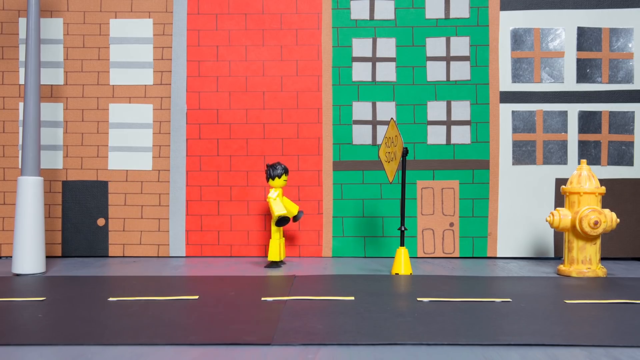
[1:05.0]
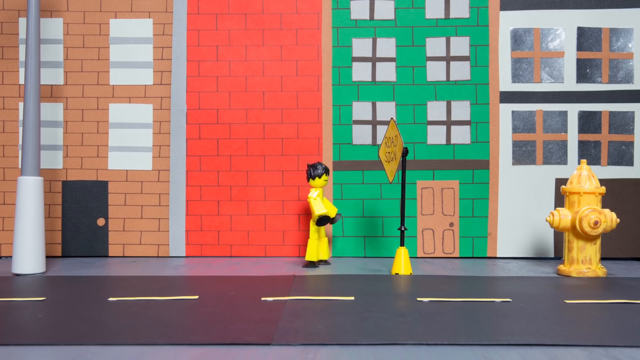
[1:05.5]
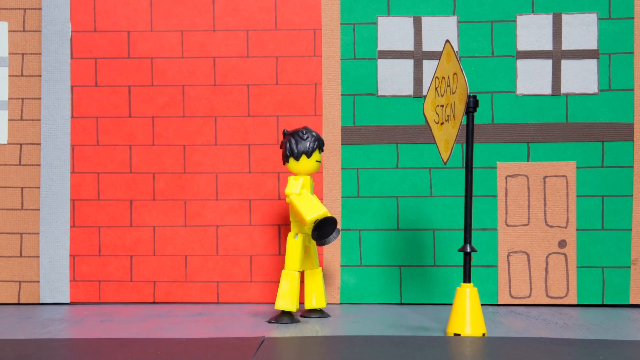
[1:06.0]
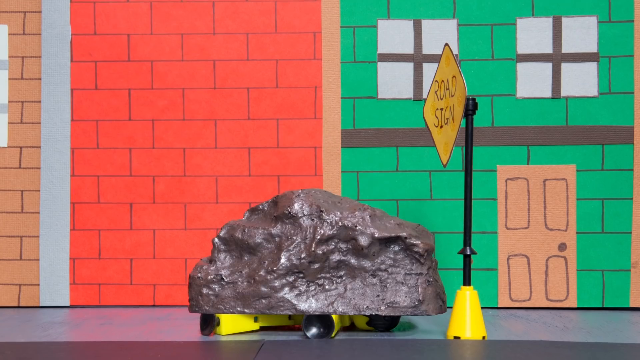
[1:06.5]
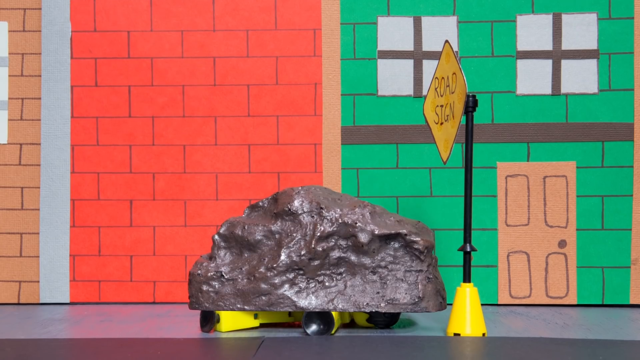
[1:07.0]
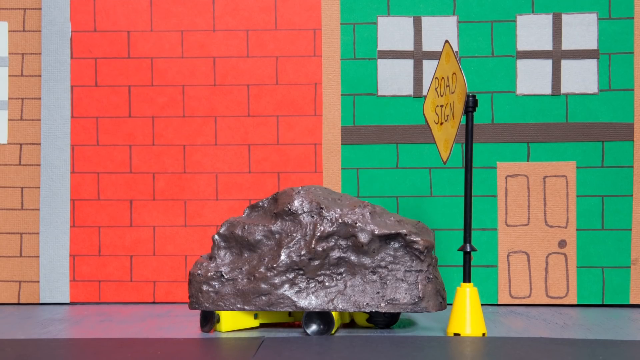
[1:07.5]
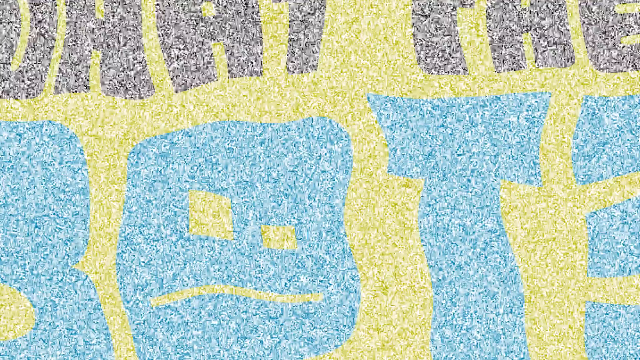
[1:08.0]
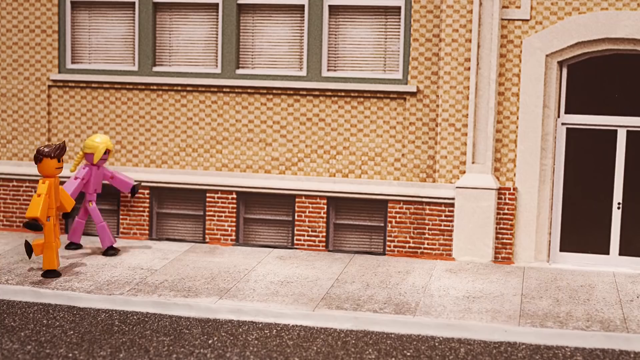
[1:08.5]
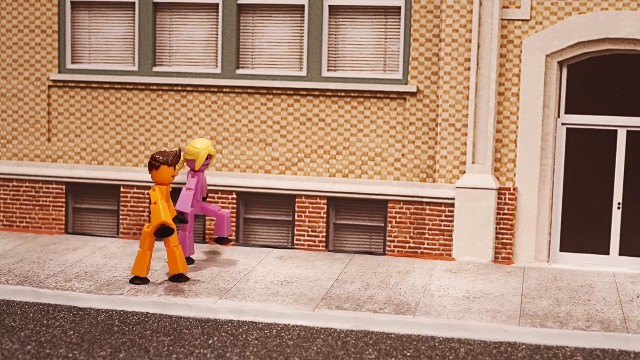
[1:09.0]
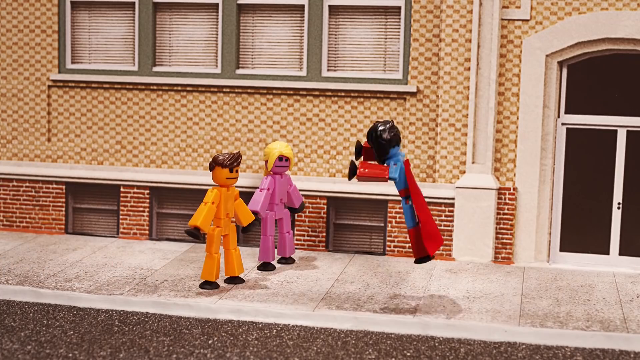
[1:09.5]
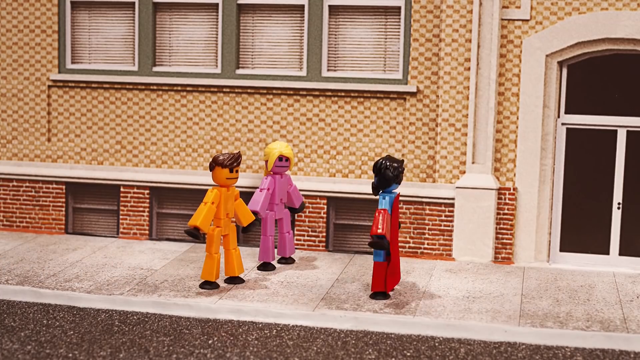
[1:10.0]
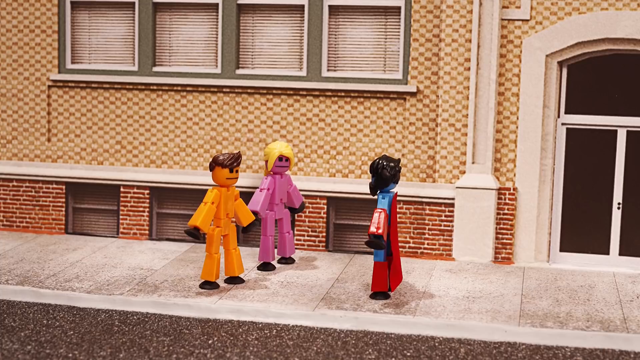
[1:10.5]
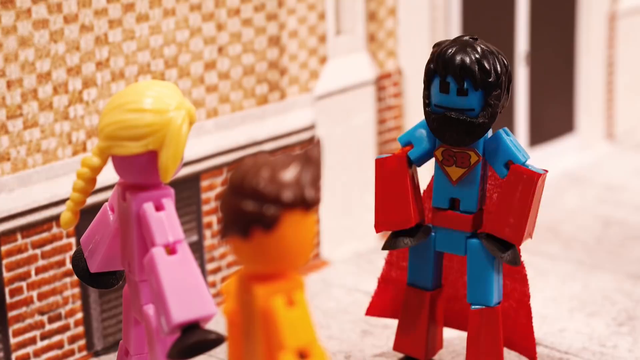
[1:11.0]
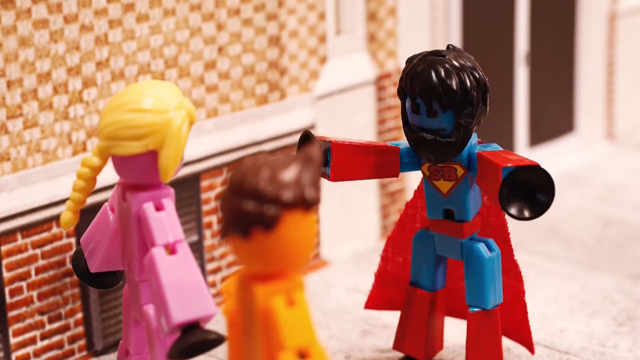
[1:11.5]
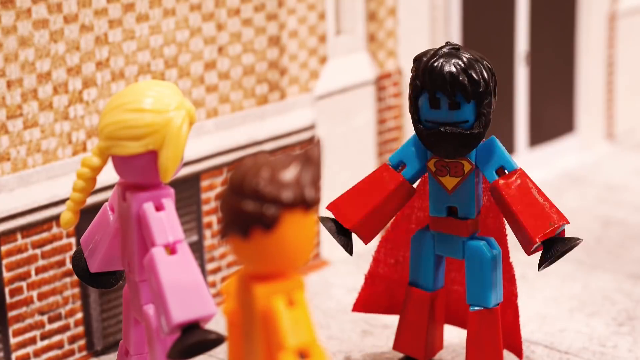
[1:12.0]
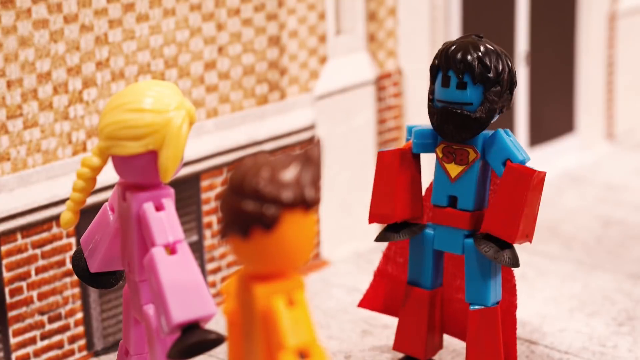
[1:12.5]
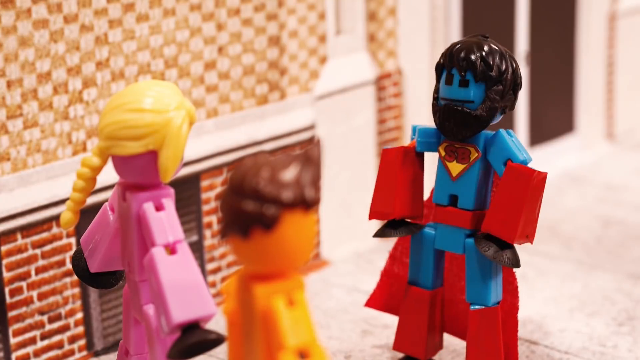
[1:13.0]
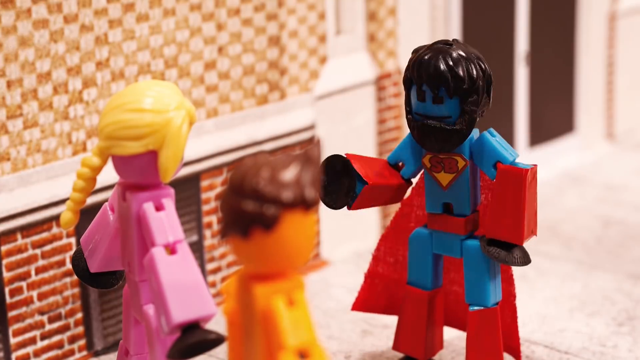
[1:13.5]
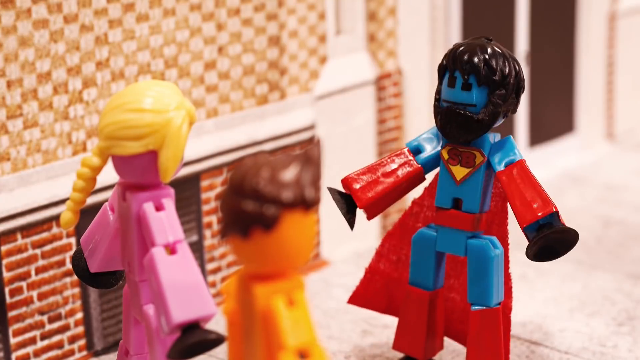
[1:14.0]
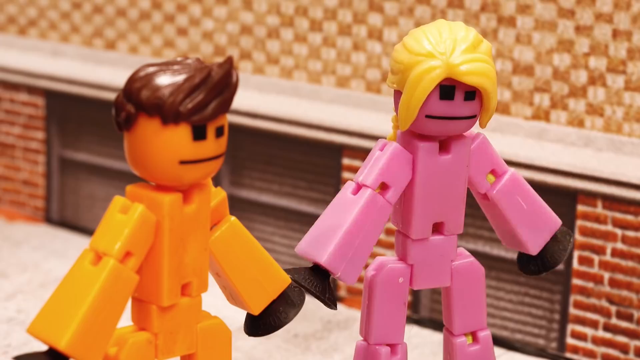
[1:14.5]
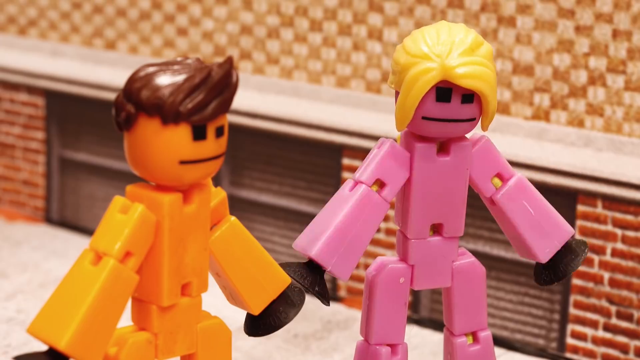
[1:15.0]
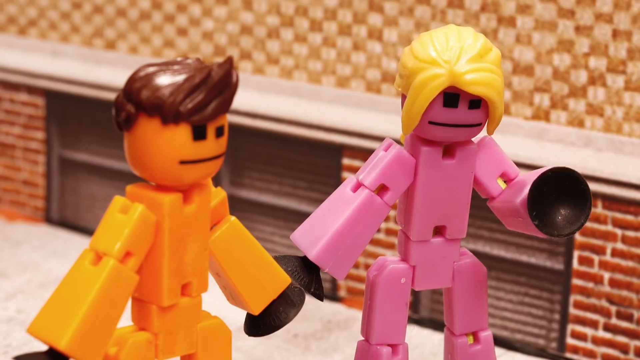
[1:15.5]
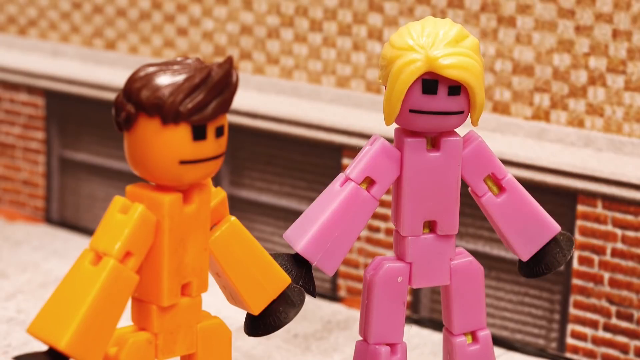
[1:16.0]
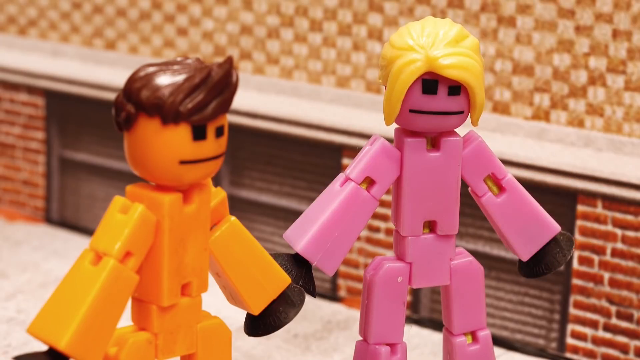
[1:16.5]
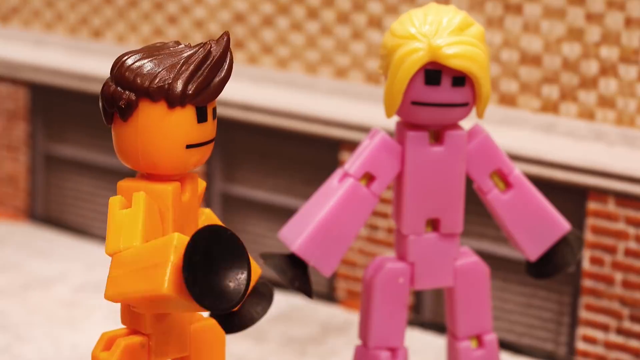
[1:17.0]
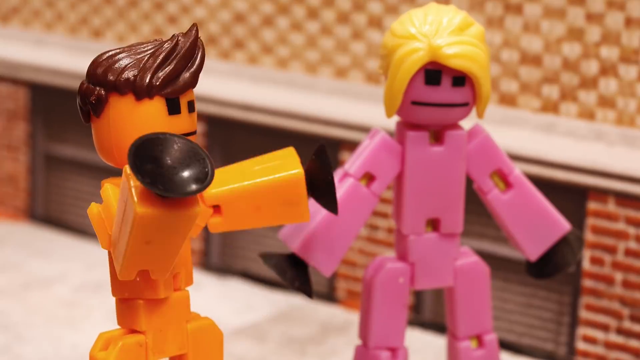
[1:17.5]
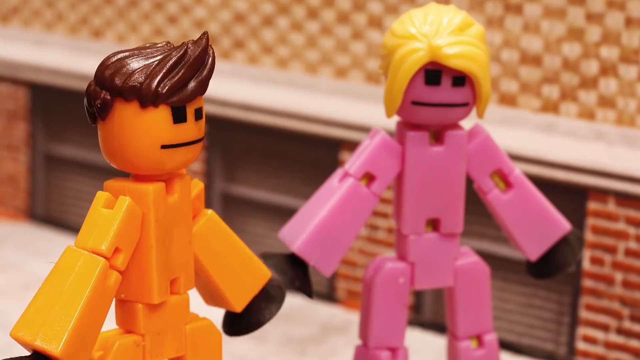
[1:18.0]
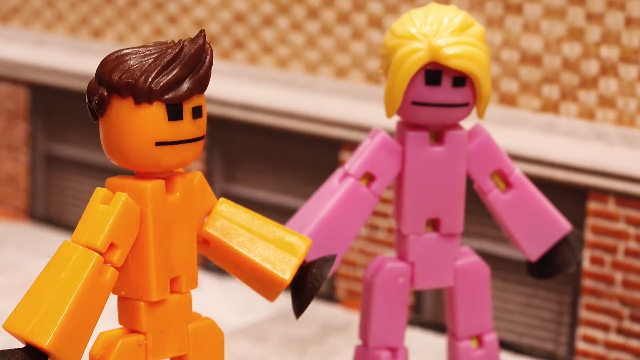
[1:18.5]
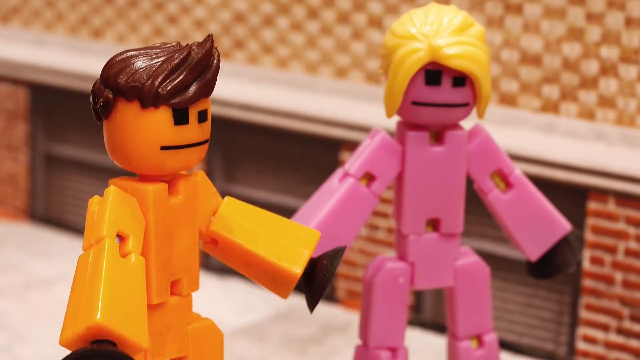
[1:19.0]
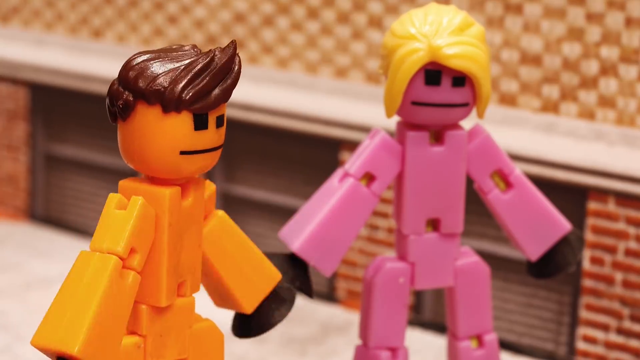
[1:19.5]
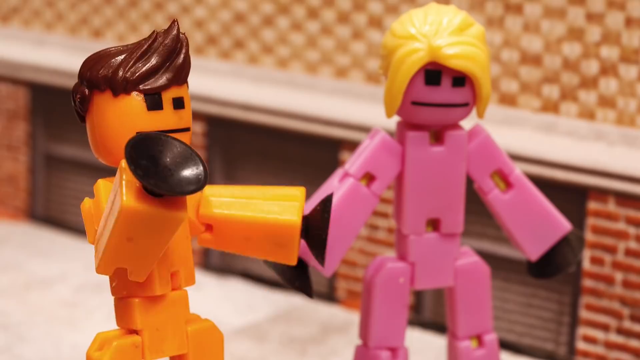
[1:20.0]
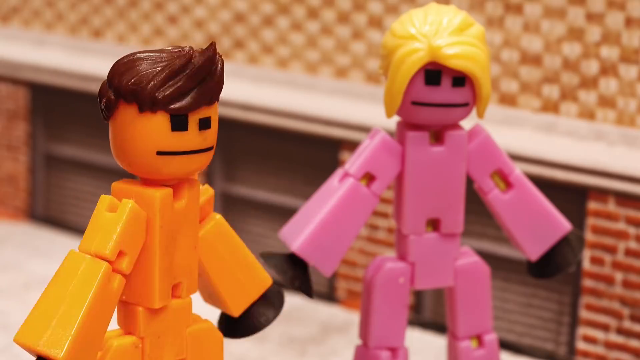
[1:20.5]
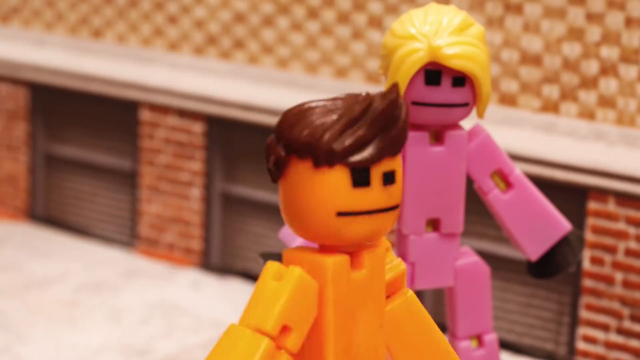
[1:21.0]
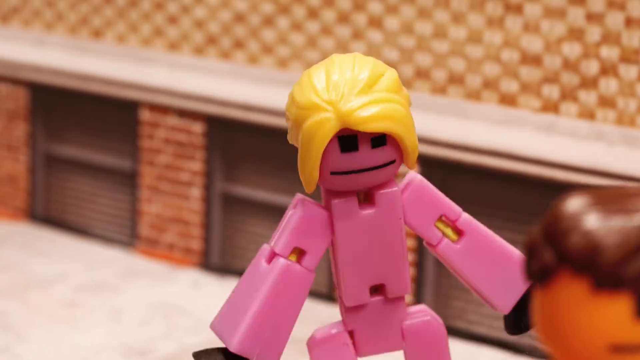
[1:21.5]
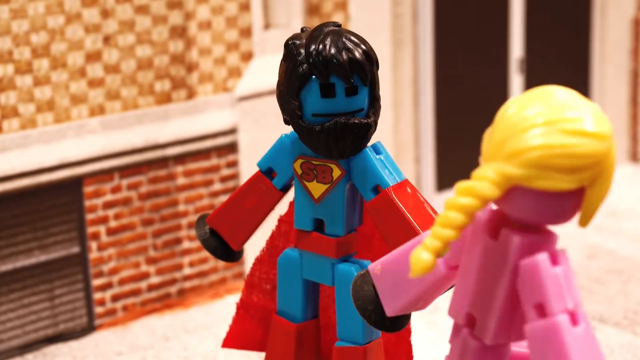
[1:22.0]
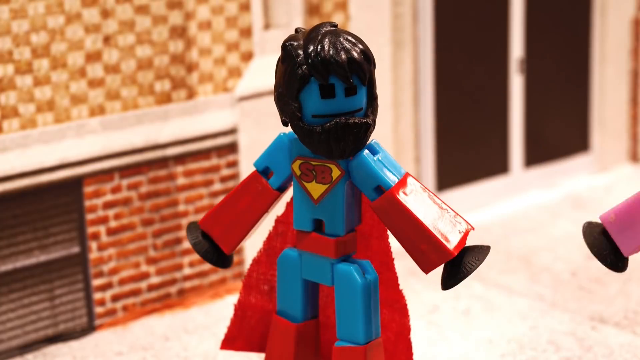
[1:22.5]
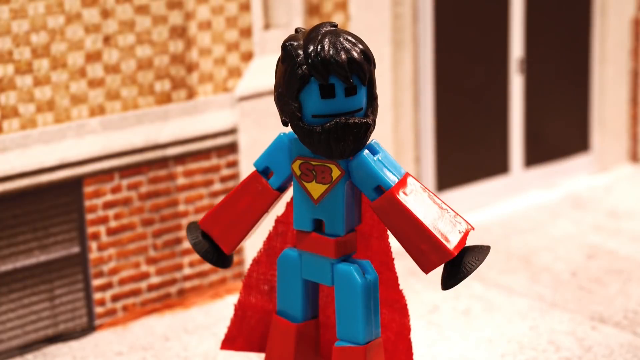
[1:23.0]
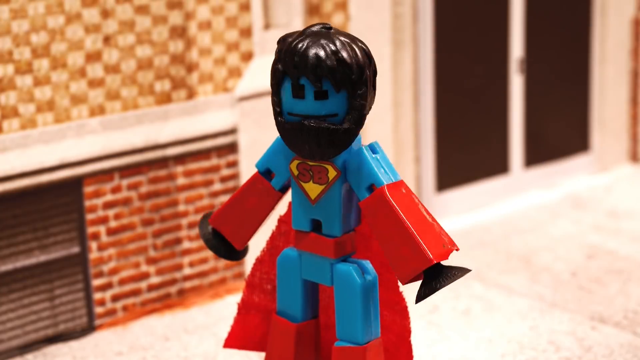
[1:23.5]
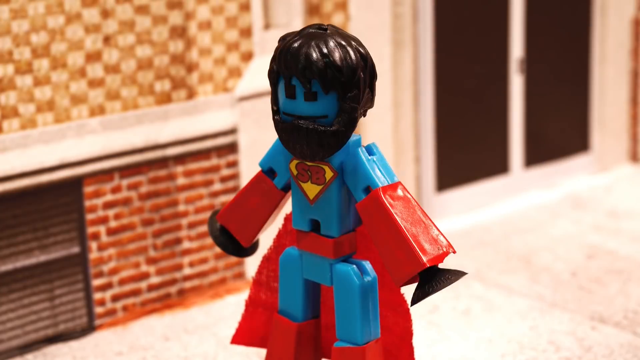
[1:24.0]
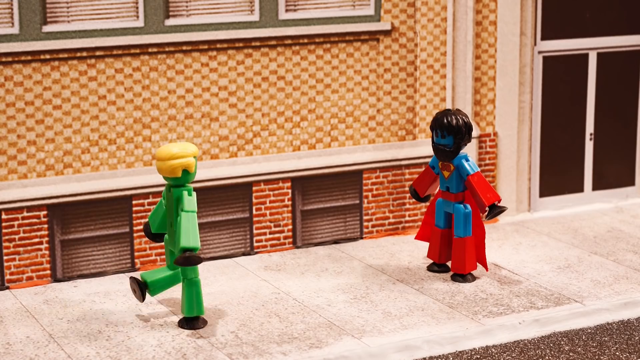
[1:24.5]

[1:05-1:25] In a city setting, the camera is on a sidewalk with buildings that are clearly made of paper. There is a yellow fire hydrant and a yellow road sign with a black pole and a four-sided diamond-shaped sign that literally says "road sign" on it. A yellow figurine walks along, and suddenly a giant rock falls from the sky and crushes it. The scene changes to two people, one orange and one pink, walking along the sidewalk next to a building. Another figurine flies in from off screen and approaches them. It is clearly modeled after Superman, with a red cape, red forearms and calves, and the rest of him blue, with a yellow diamond outlined in red in the middle of his chest bearing the red letters "S.B." The Superman figure and the two others talk briefly, gesturing around. The two figures then walk off, leaving the Superman figure alone, and a green figurine approaches him.